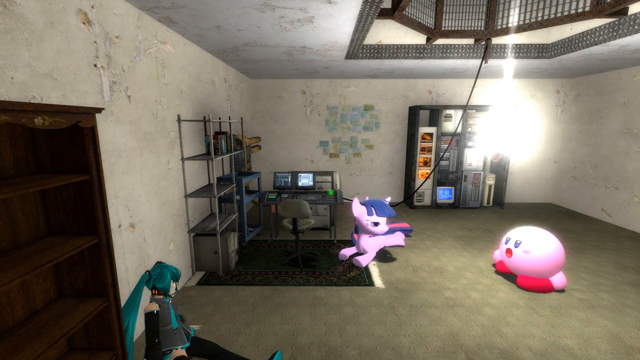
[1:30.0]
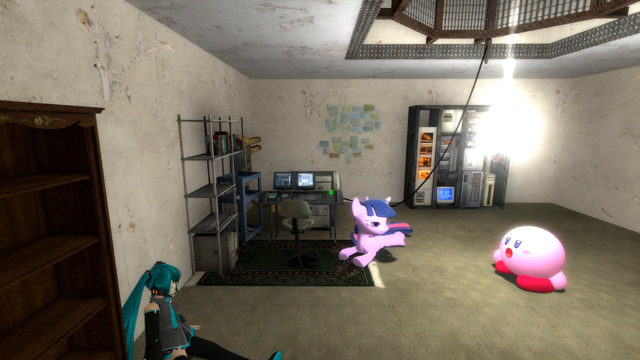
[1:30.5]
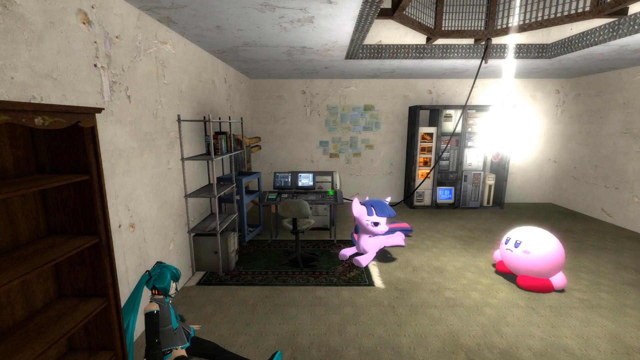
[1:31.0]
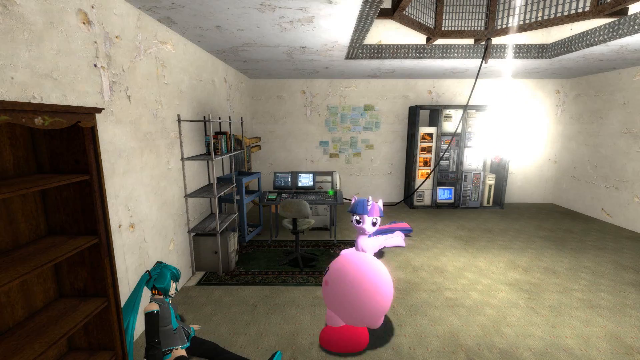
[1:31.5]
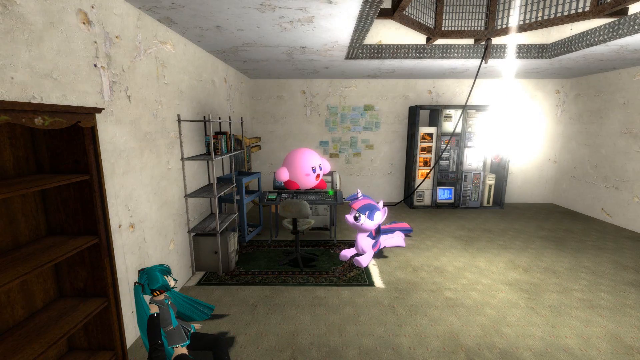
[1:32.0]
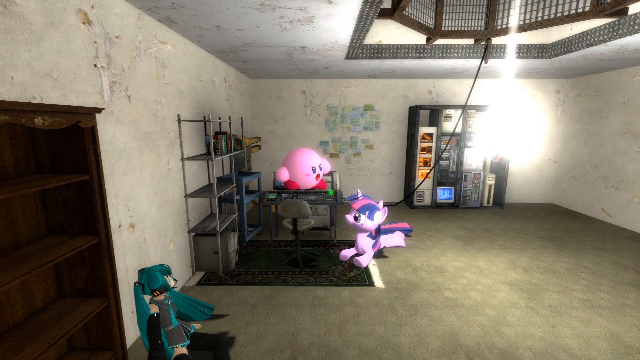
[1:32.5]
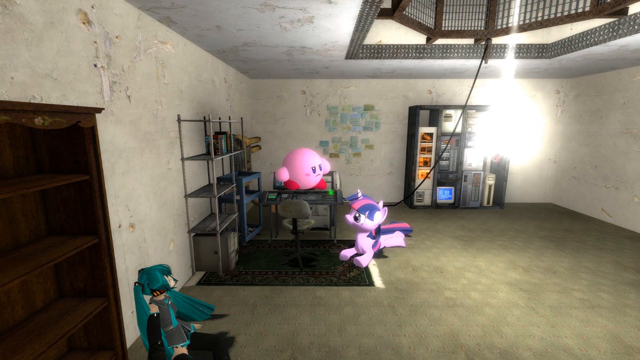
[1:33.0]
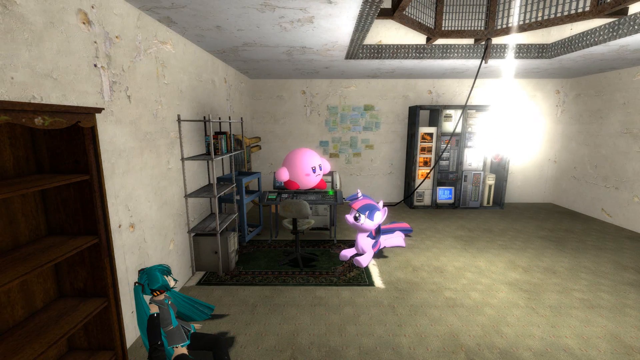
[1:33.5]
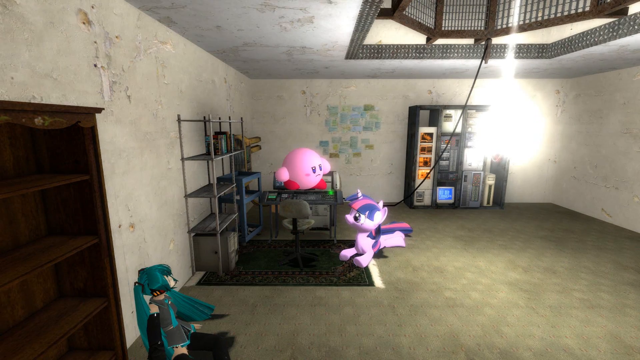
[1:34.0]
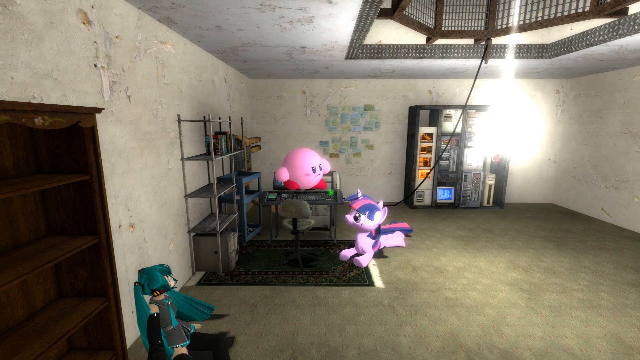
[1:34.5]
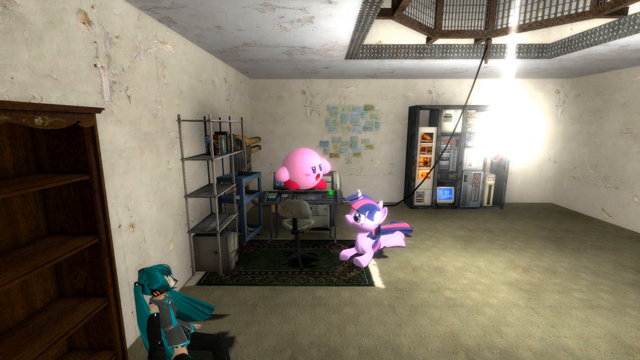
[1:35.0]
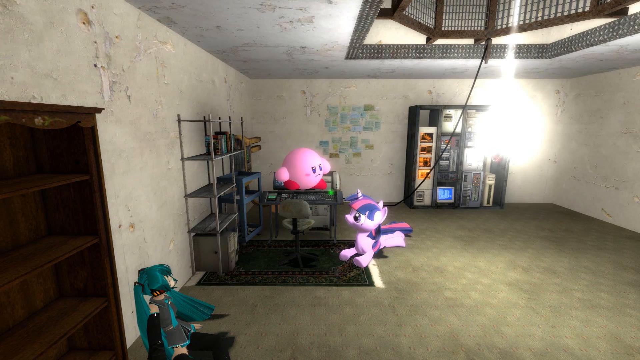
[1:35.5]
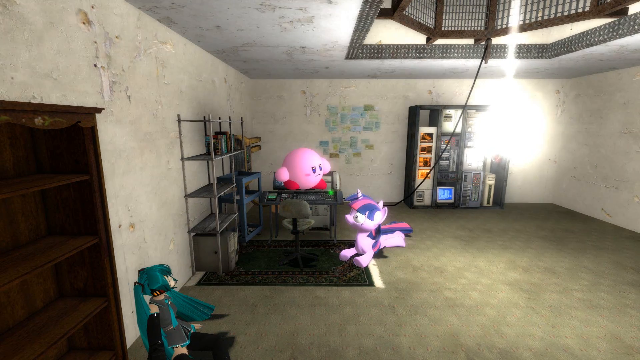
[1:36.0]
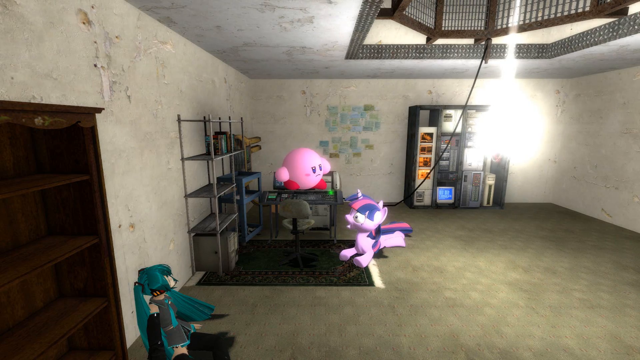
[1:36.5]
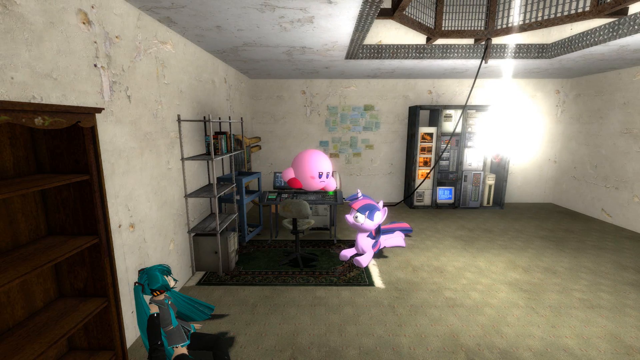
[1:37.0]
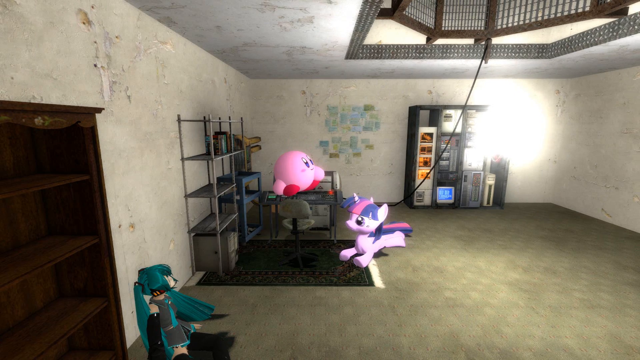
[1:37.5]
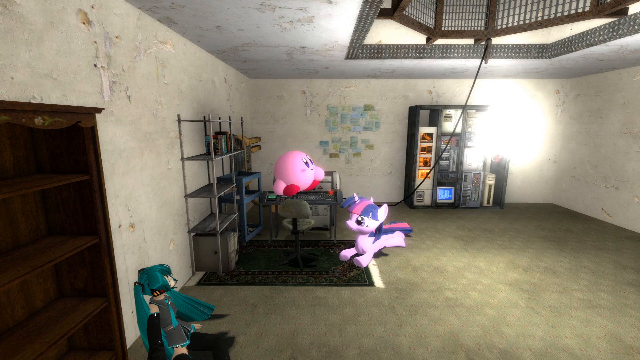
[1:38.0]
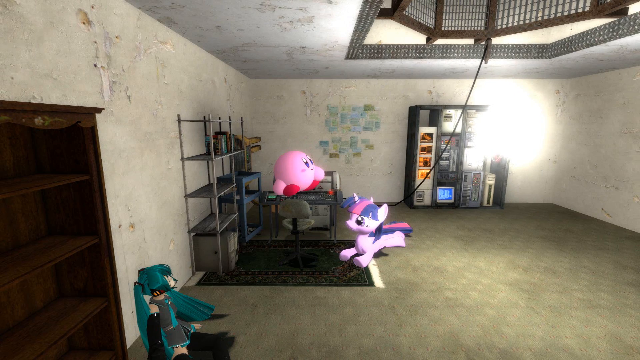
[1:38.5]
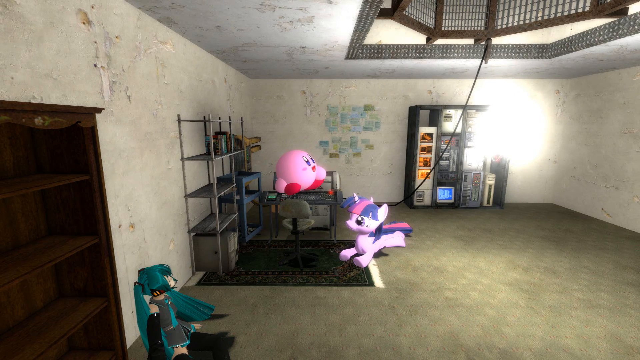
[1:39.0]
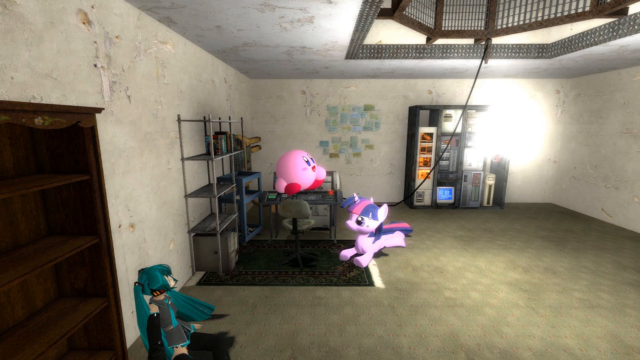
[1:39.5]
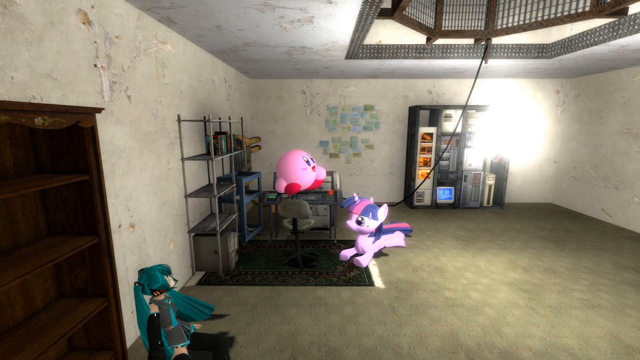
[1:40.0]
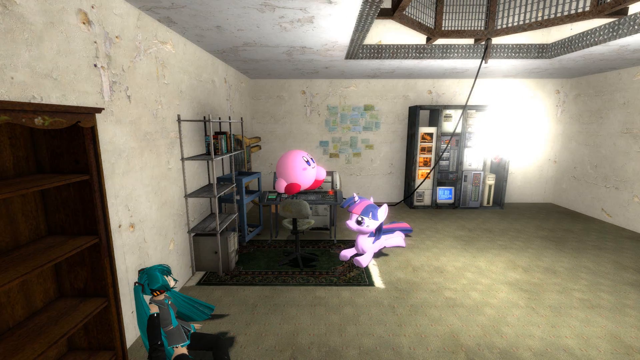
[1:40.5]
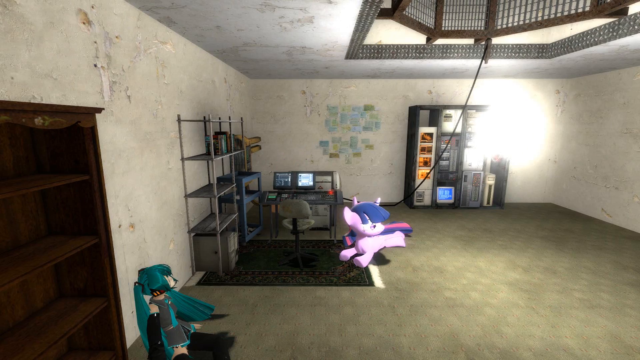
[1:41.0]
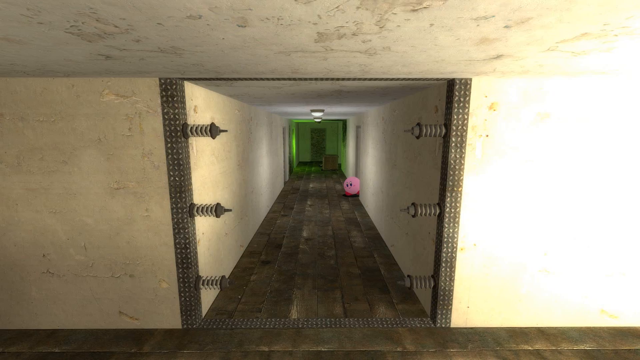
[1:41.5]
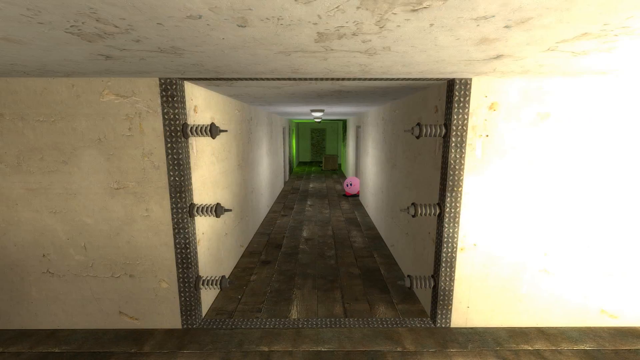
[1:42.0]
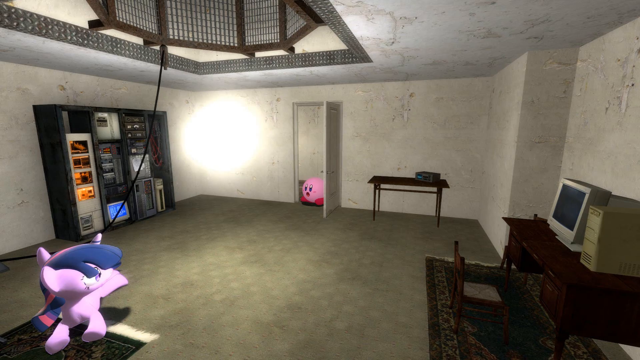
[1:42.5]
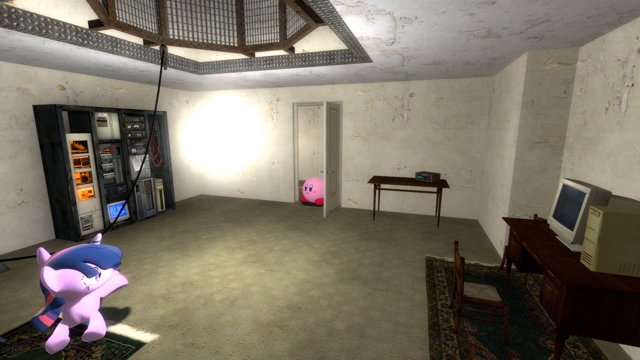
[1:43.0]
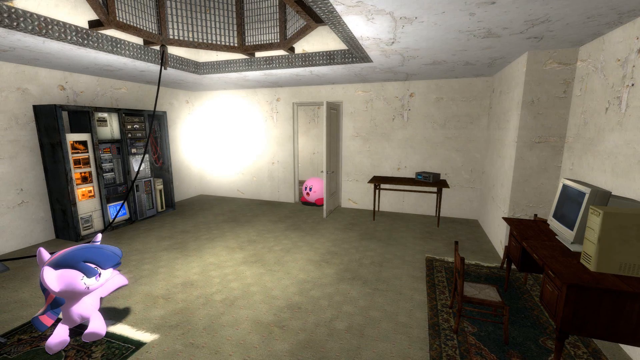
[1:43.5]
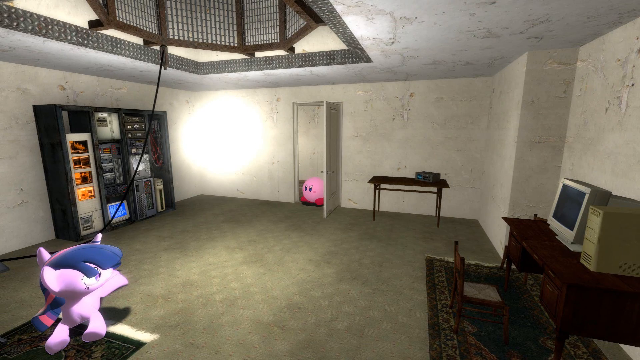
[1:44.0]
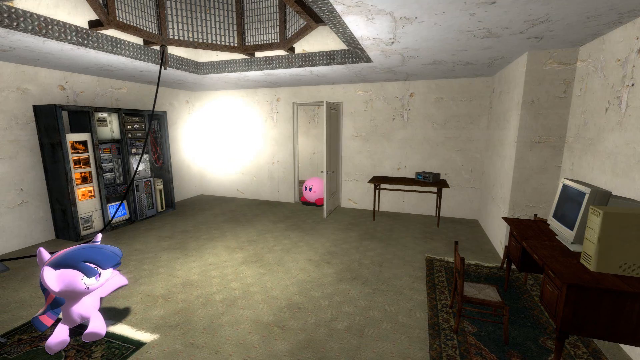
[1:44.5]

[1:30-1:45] The little pink guy jumps on top of what appears to be a desk and talks to the horse, which might be a unicorn-like horse; it is pink with very blue hair. The pink creature goes back out into the hall and stands in the doorway, talking to the princess and the horse, seemingly less panicked. The horse looks to be tied to a rope coming down from the ceiling. Computers are on both walls of the room, and the shelving units are on a black rug with a neutral-colored fringe. The princess just sits there, not doing anything; only the pink guy and the horse seem to be talking. The horse lies on the floor and does not get up, and it is unclear whether it is tied to the rope-like thing.